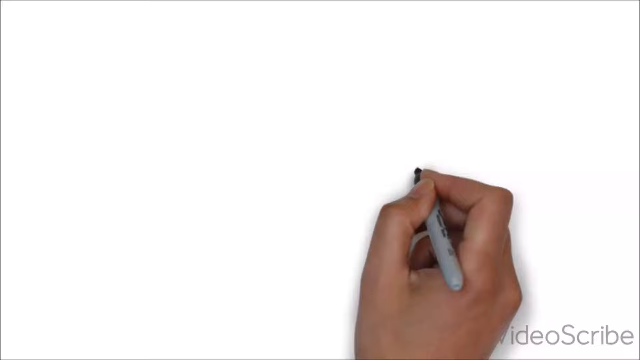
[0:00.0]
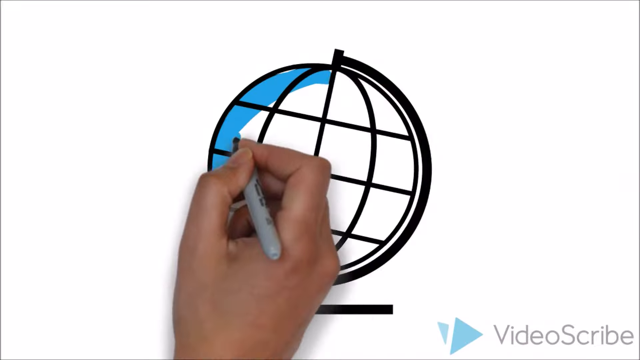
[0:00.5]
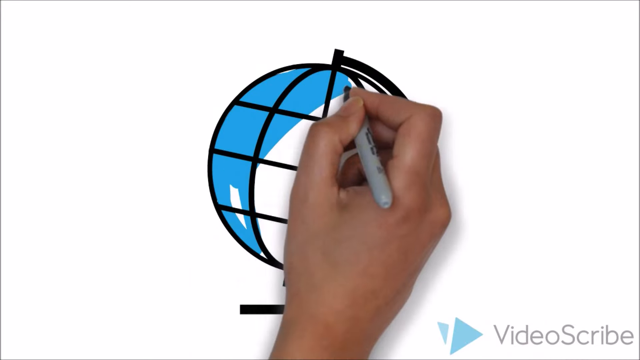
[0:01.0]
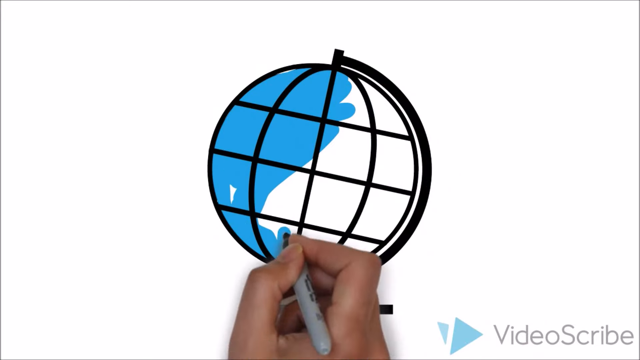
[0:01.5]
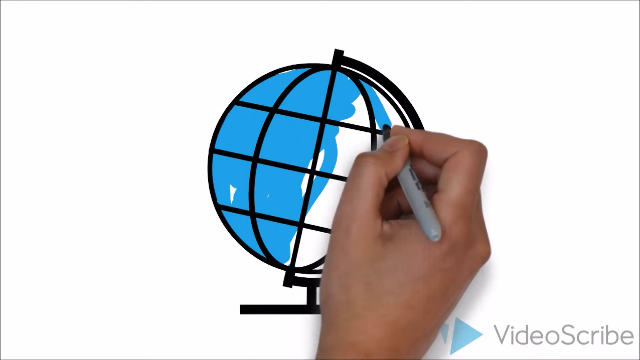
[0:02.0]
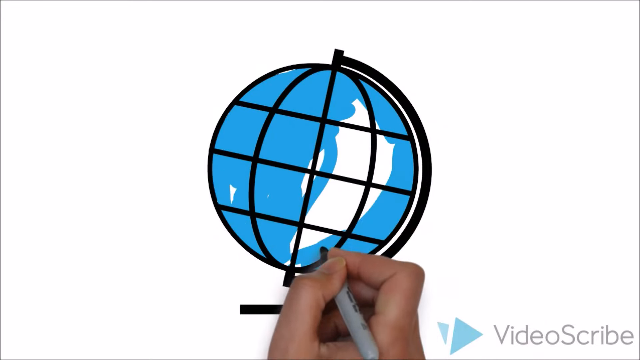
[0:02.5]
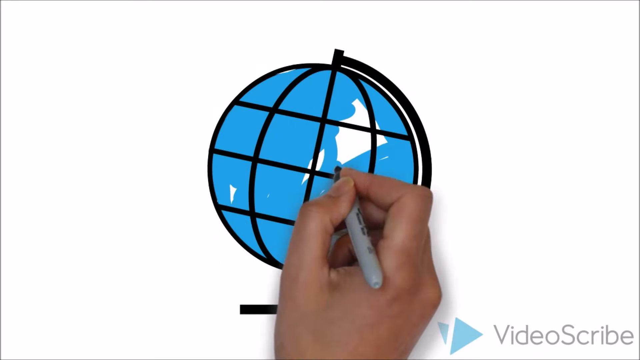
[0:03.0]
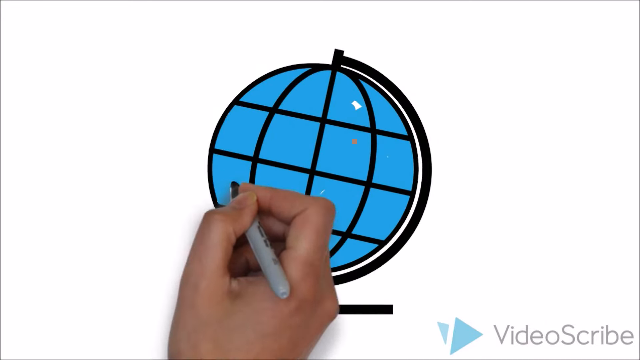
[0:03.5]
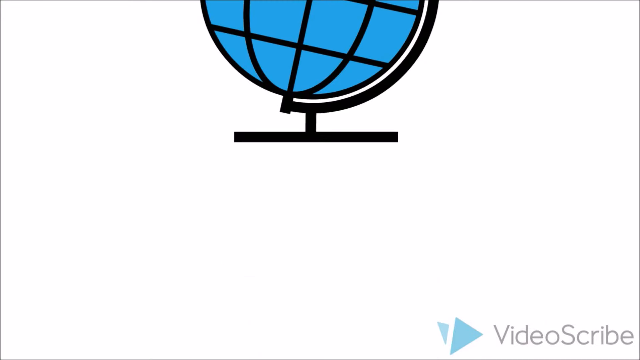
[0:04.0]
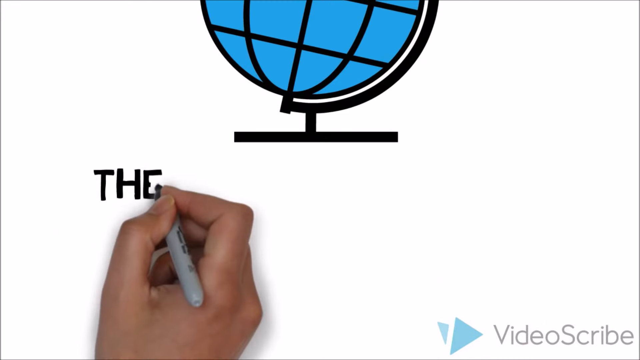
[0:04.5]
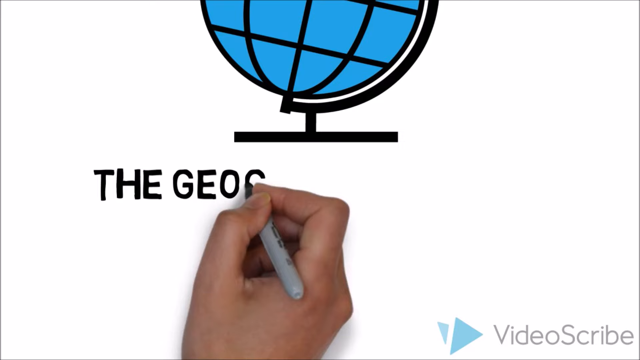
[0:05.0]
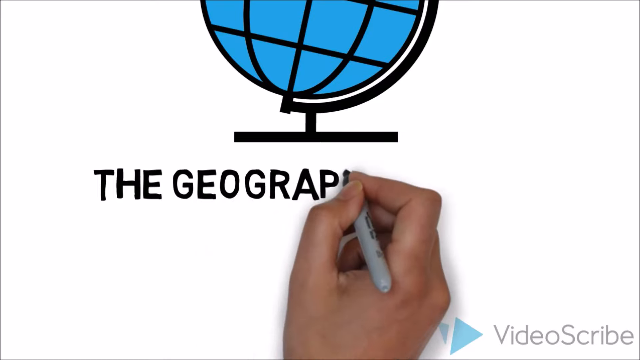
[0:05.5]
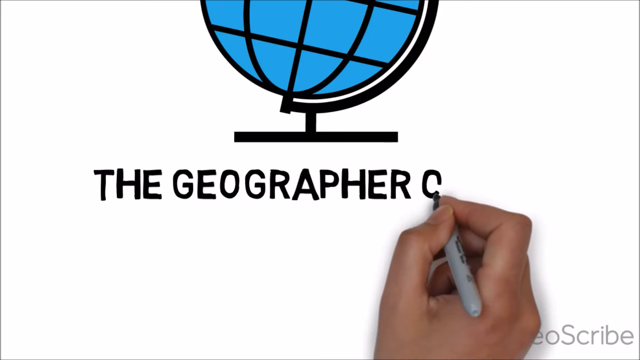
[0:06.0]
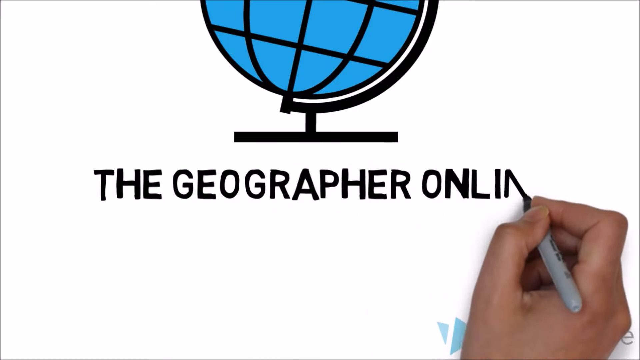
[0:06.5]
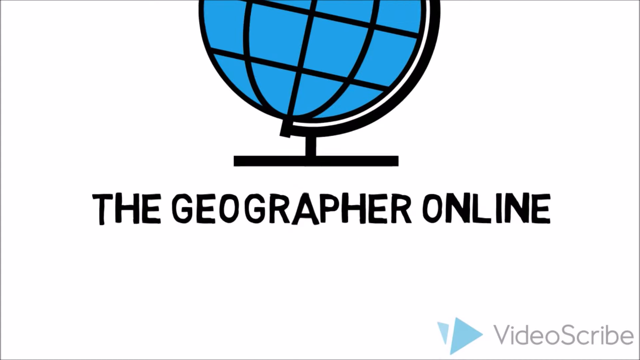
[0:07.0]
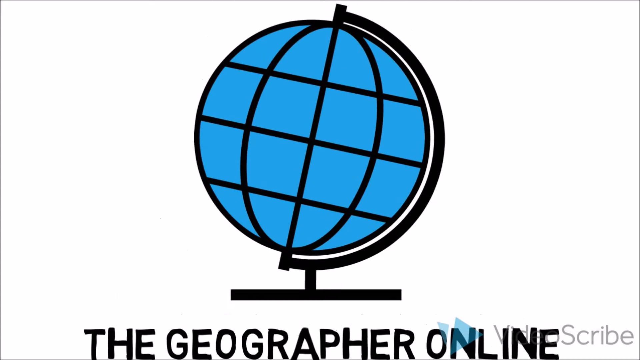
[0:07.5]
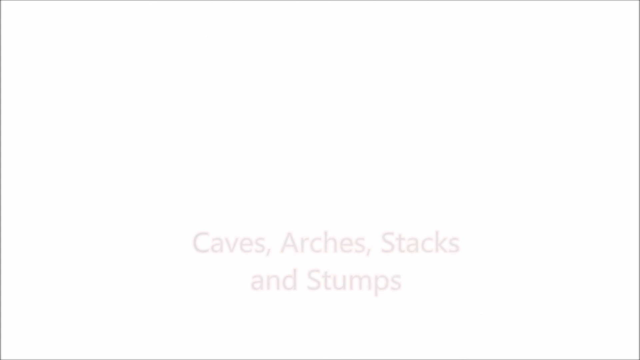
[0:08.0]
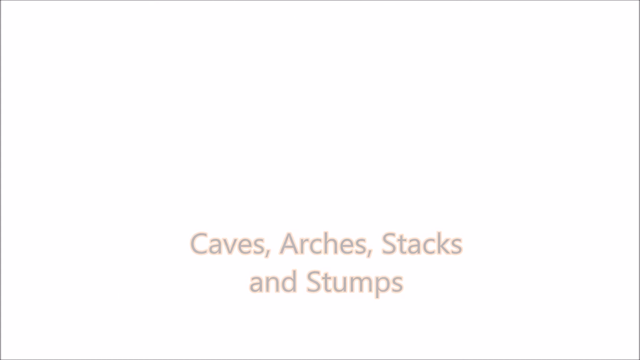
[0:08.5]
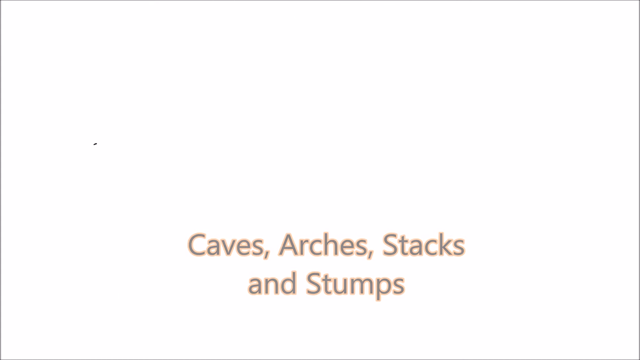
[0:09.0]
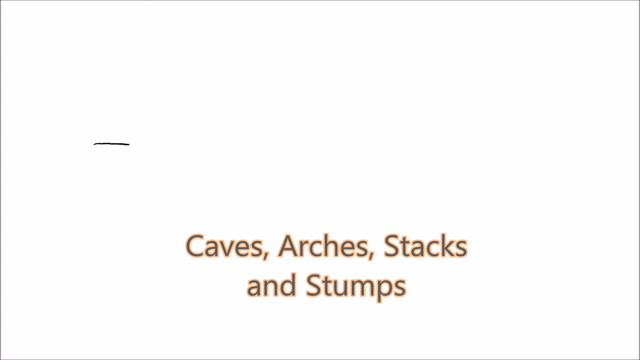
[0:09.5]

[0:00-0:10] A globe is drawn on a white background, and the text "video scribe" appears, apparently the production credit. A hand does all the drawing and writing on screen. After drawing the globe, it paints the globe blue, covering it completely. The hand then writes "the geographer online" in capital letters, possibly a channel name, followed by "caves arcs stacks and stumps", apparently the subtopics of the video.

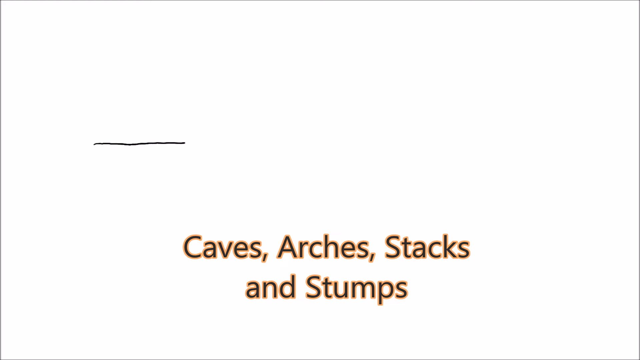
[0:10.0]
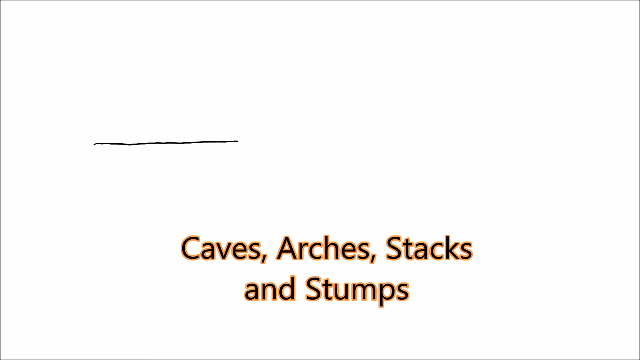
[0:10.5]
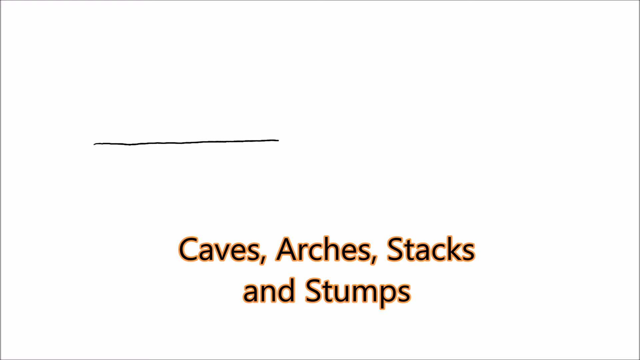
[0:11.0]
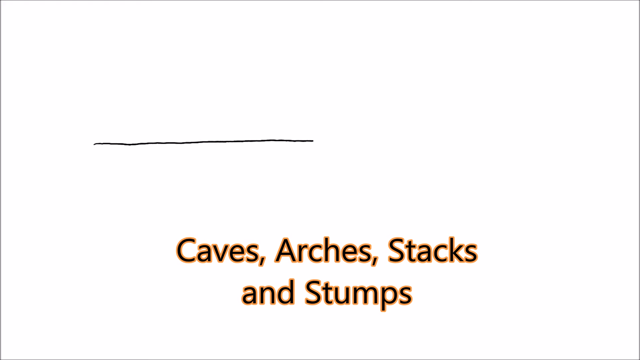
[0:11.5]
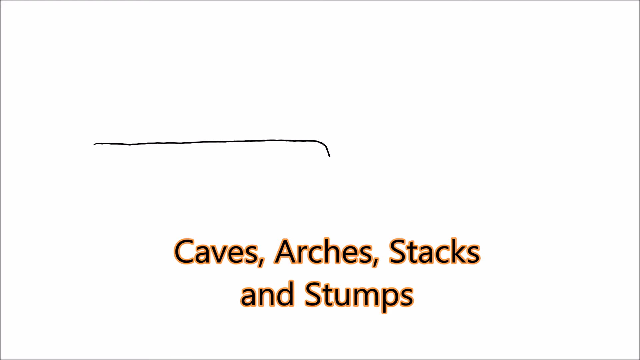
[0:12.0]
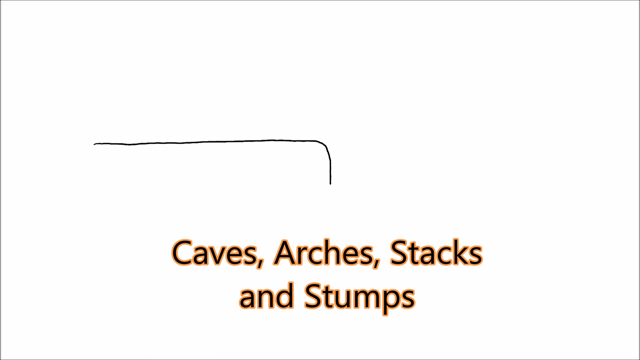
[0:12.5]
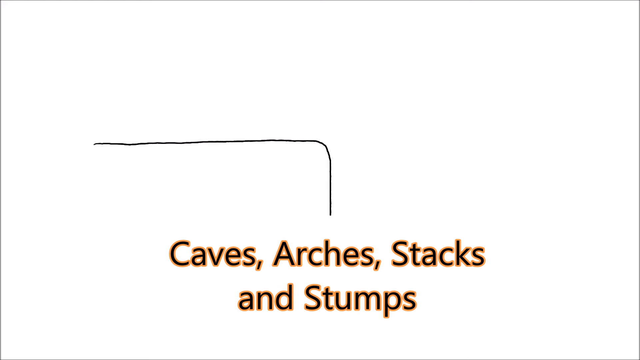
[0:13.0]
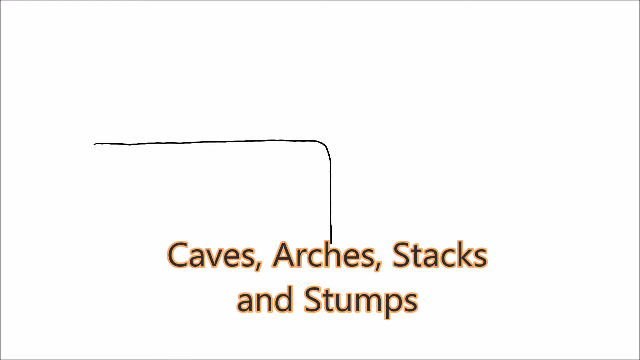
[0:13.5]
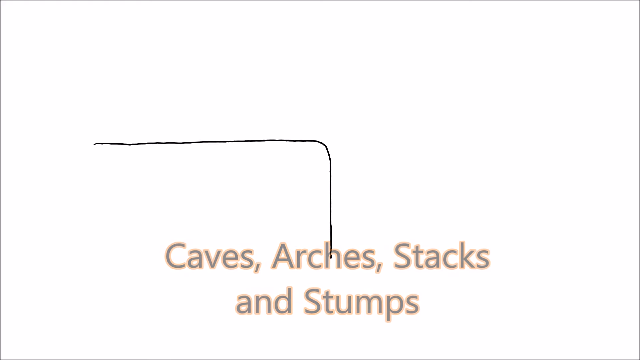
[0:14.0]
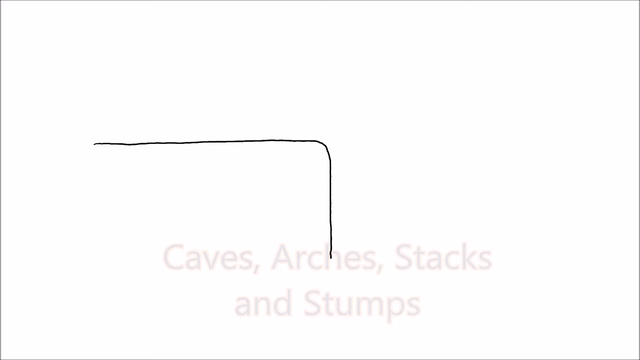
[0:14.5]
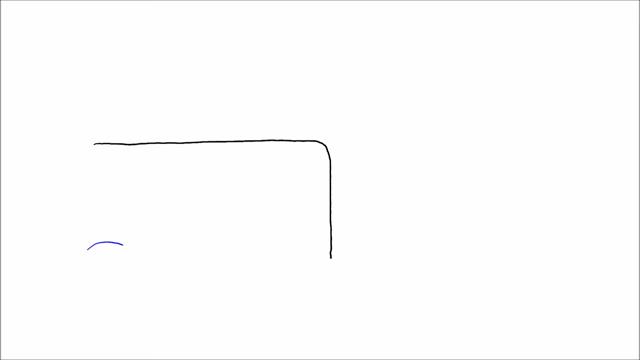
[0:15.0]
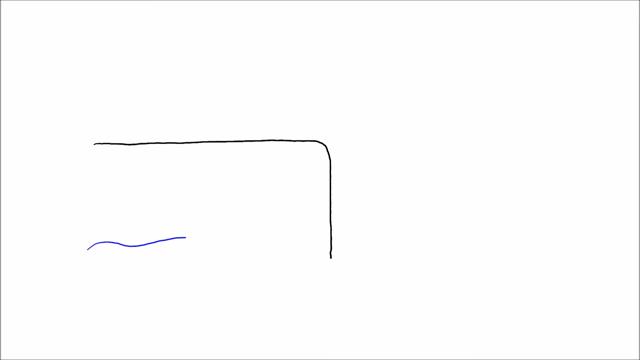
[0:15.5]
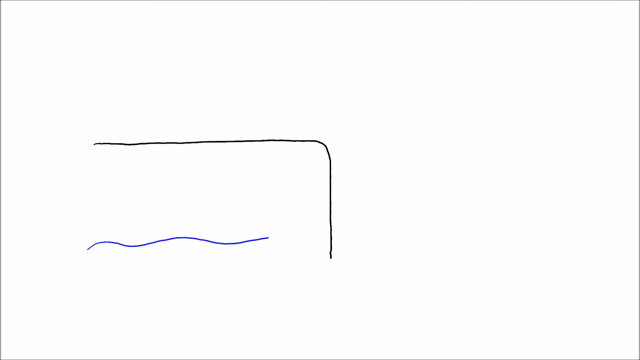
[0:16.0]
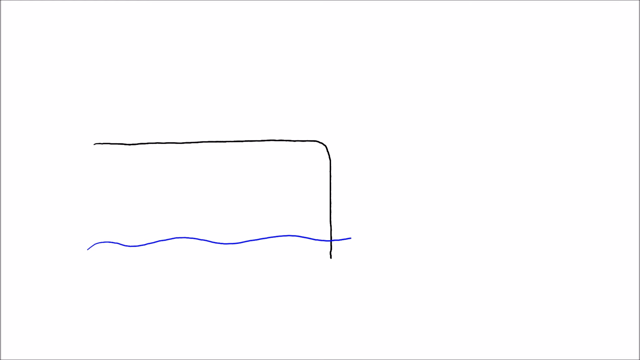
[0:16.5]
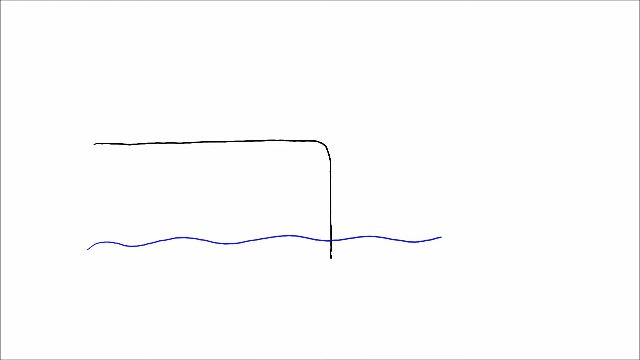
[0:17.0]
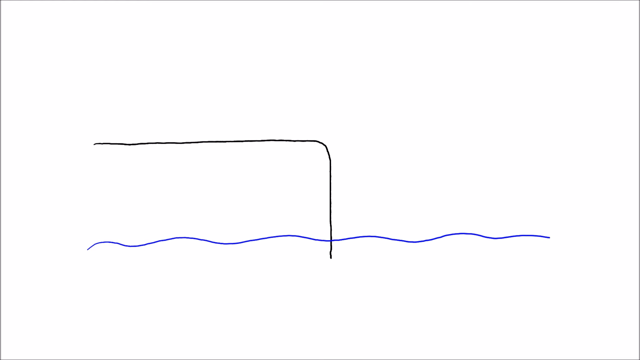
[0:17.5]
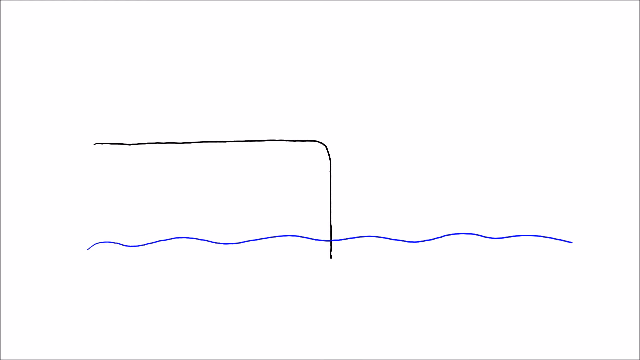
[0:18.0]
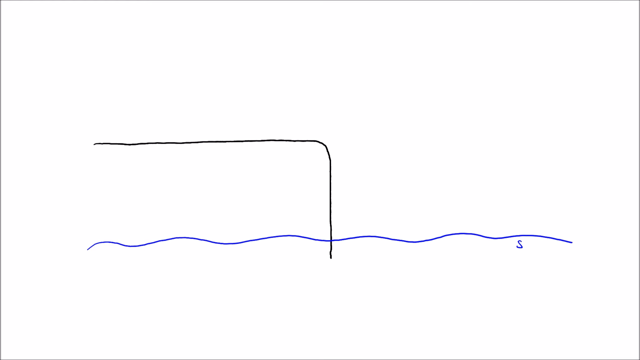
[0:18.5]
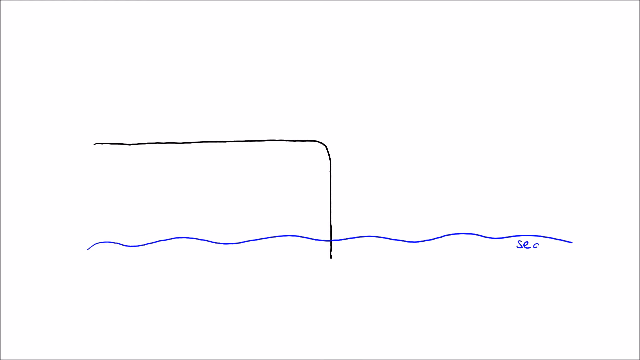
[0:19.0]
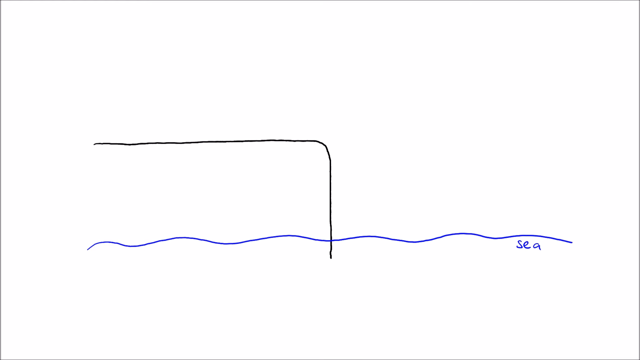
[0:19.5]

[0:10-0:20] The title "the geographer online" and the subtopics caves, arcs, stacks and stumps are on screen, the subtopics written in red or brownish-red. A black line is drawn on the white background, a kind of incomplete square shape that indicates a mountain. A blue wavy line is then drawn to indicate the sea, and the shot cuts.